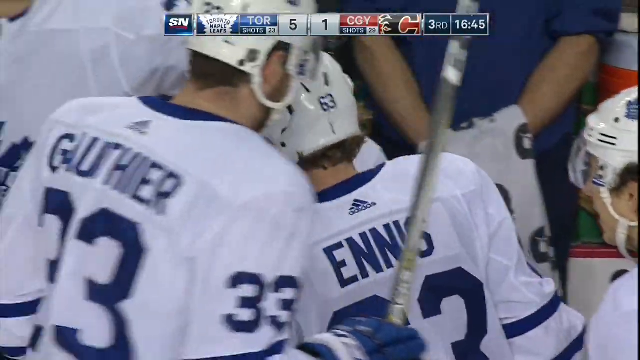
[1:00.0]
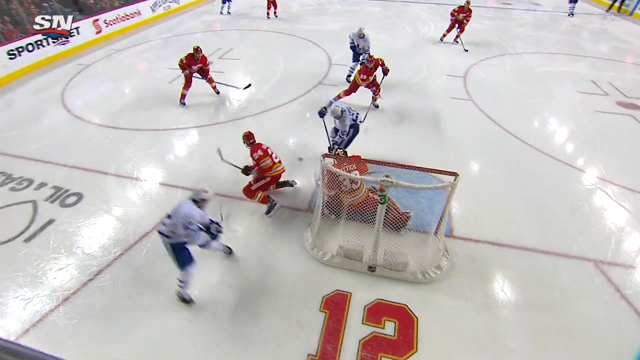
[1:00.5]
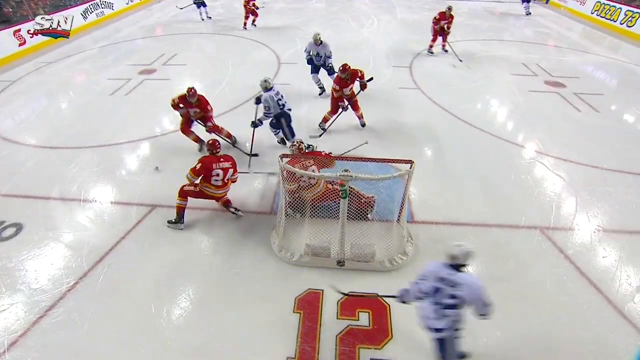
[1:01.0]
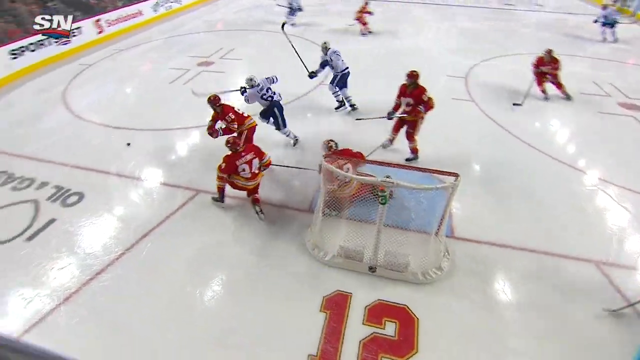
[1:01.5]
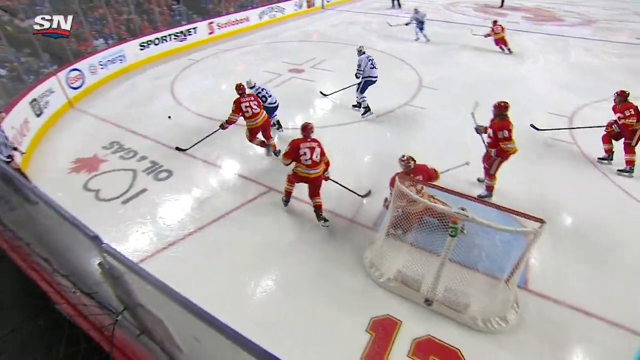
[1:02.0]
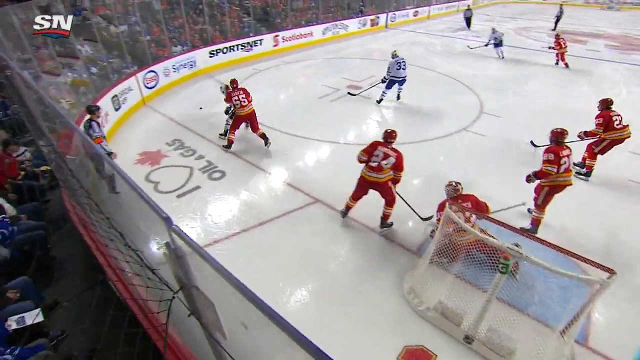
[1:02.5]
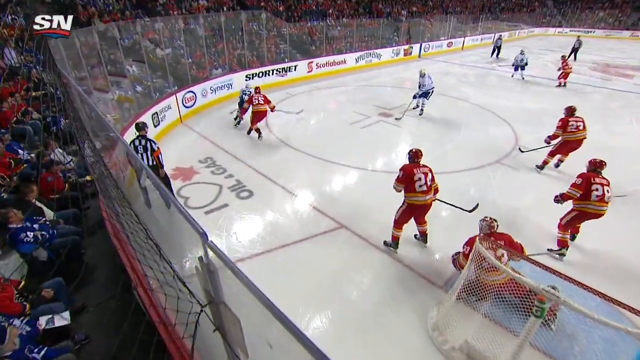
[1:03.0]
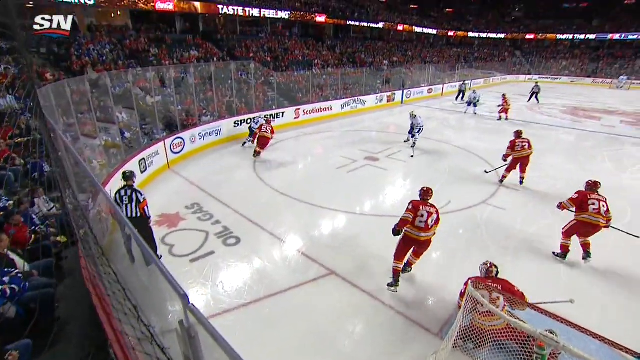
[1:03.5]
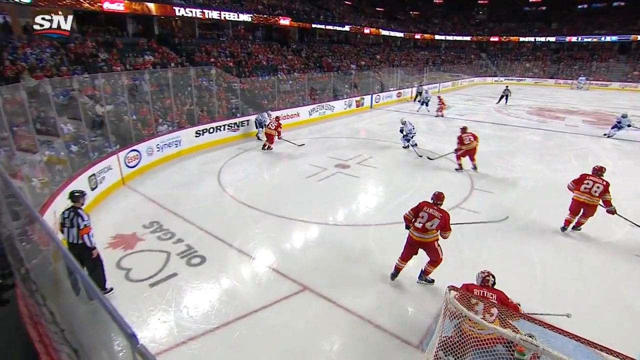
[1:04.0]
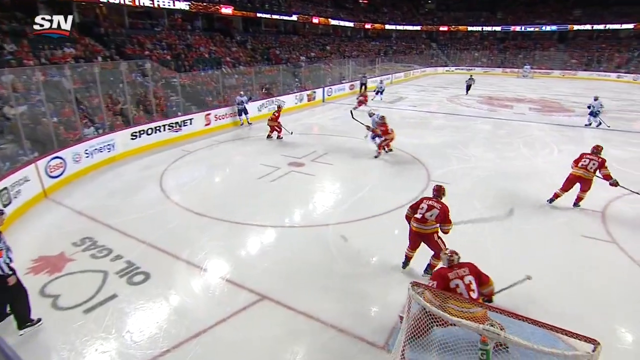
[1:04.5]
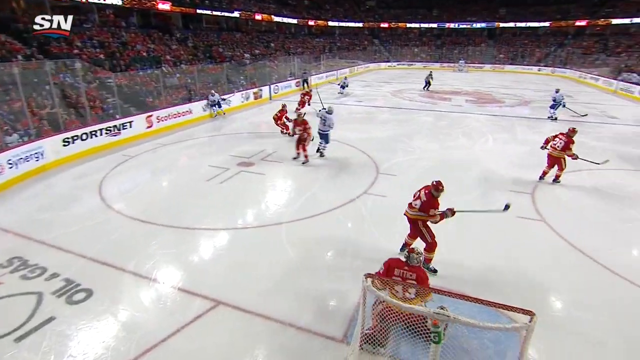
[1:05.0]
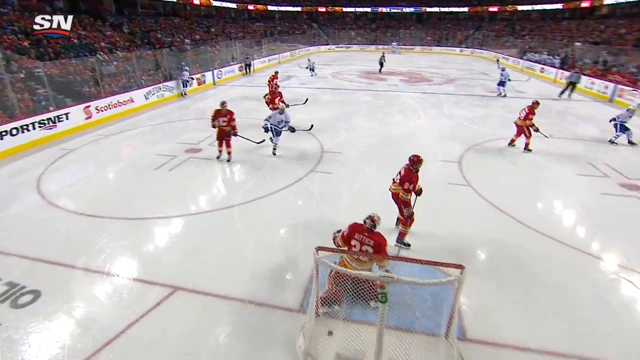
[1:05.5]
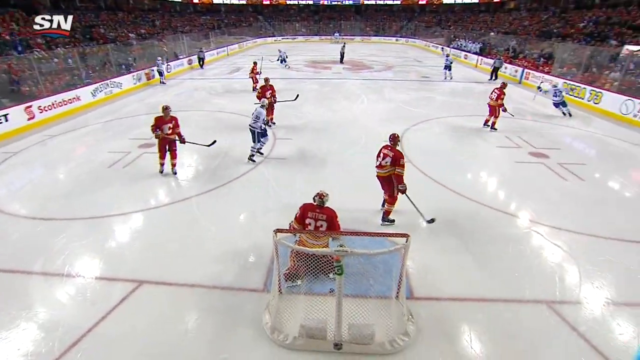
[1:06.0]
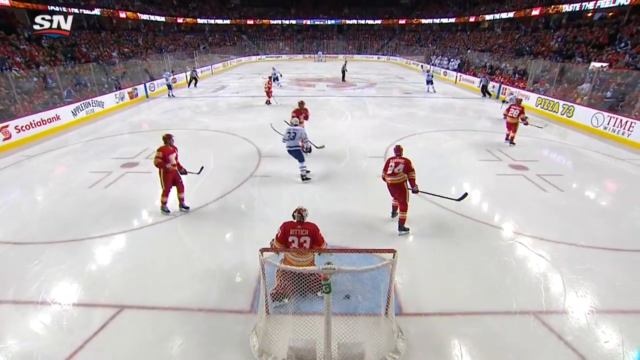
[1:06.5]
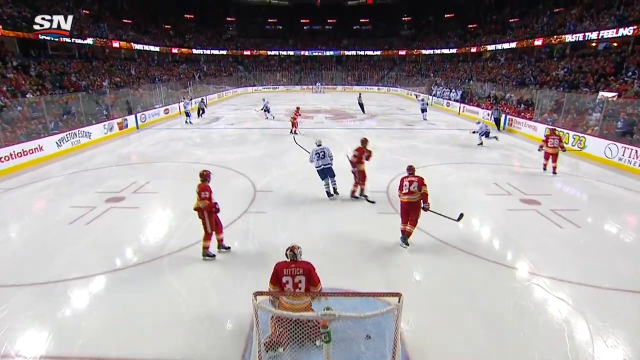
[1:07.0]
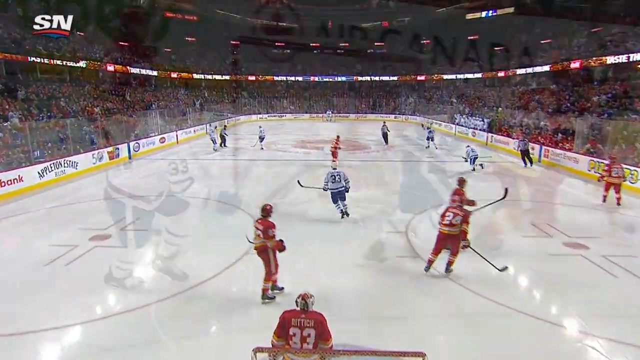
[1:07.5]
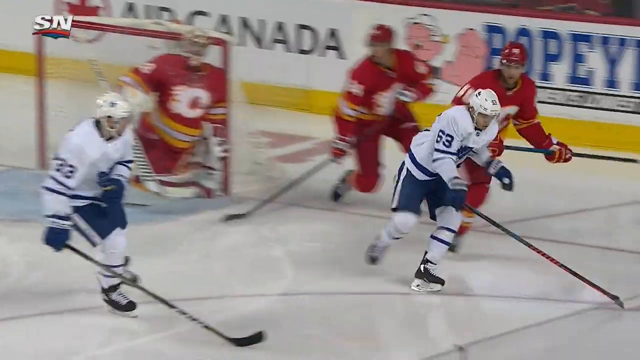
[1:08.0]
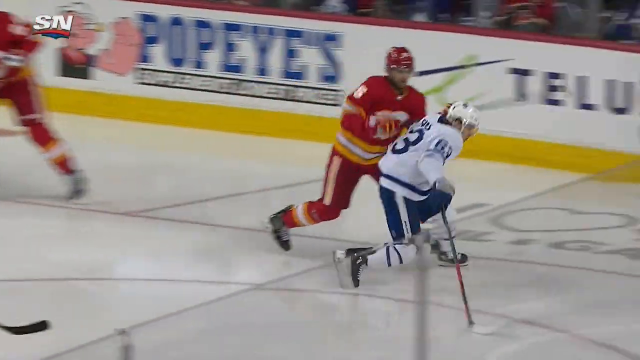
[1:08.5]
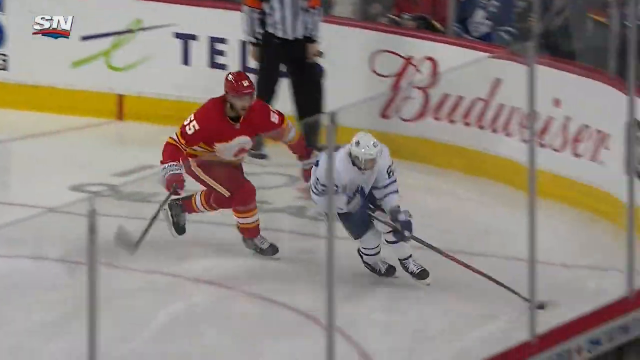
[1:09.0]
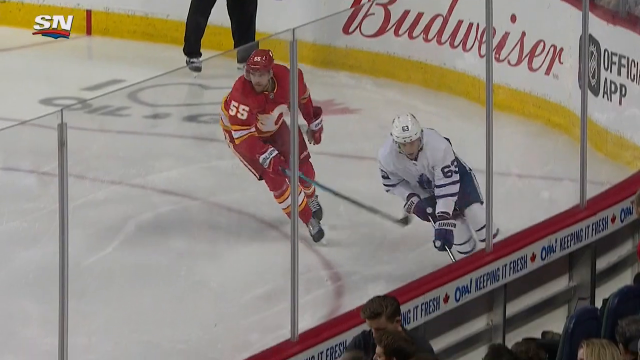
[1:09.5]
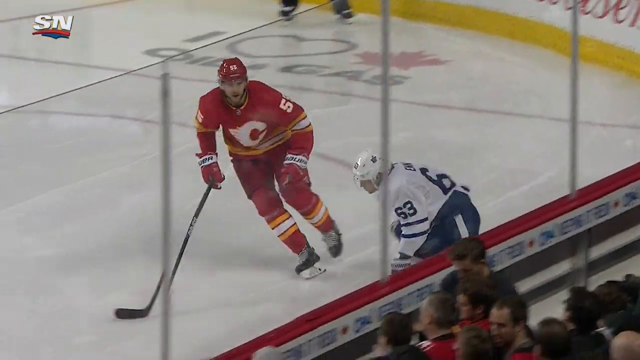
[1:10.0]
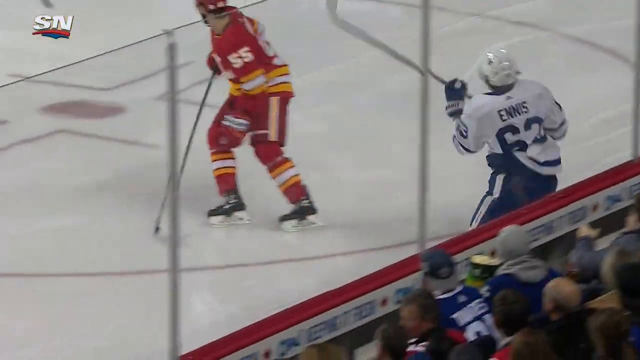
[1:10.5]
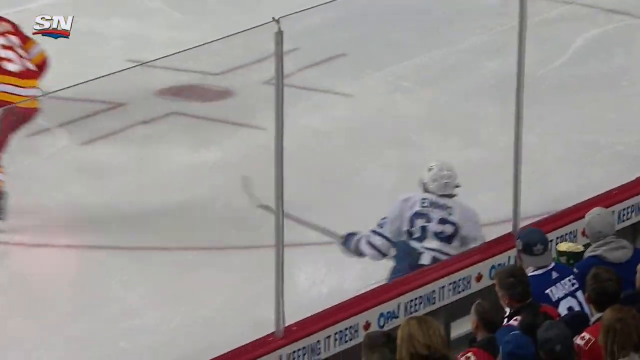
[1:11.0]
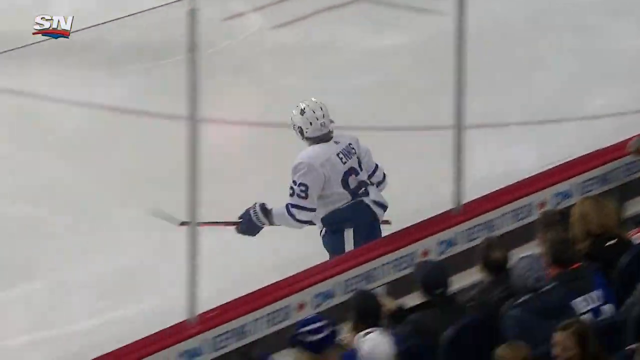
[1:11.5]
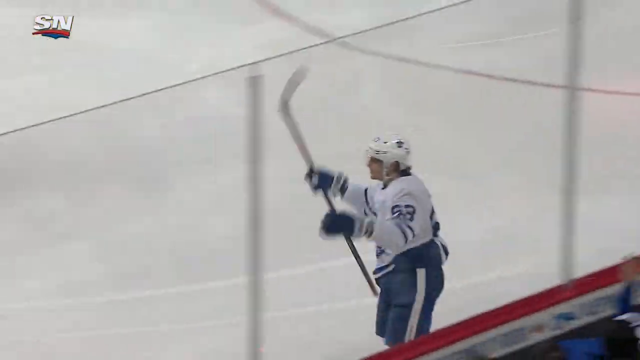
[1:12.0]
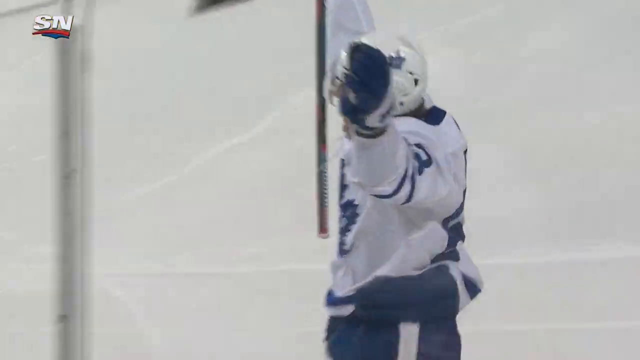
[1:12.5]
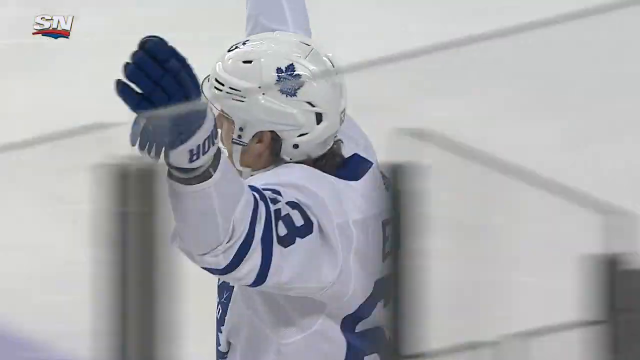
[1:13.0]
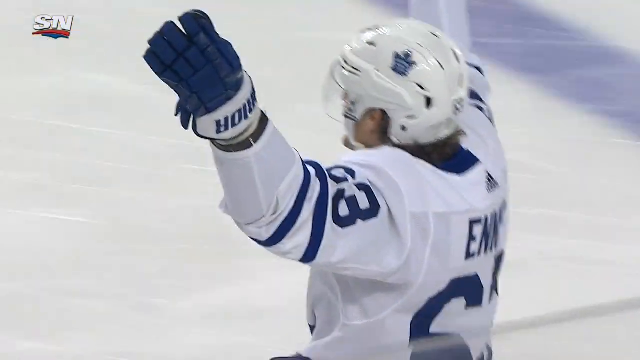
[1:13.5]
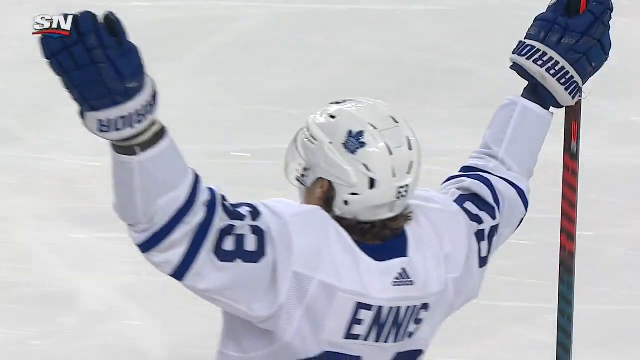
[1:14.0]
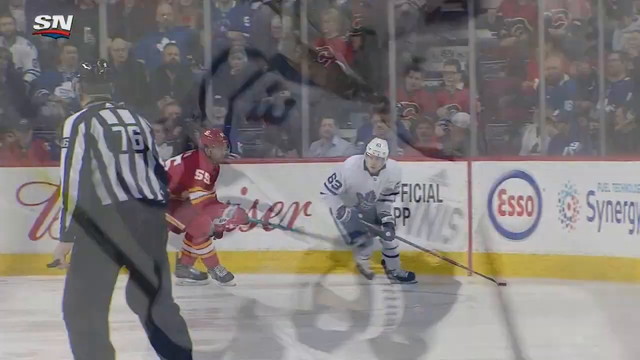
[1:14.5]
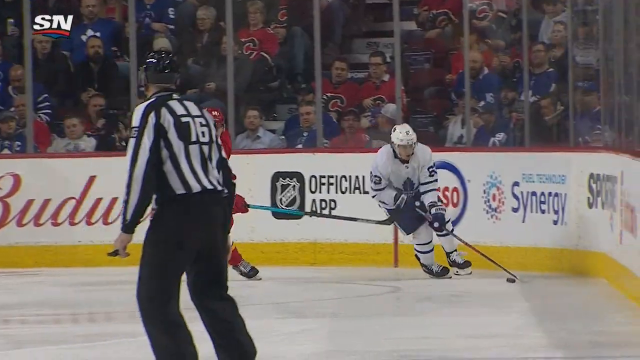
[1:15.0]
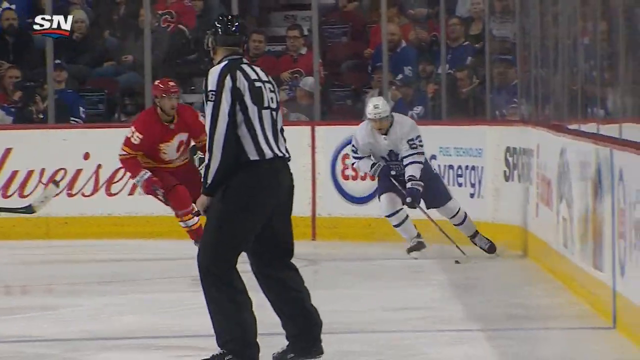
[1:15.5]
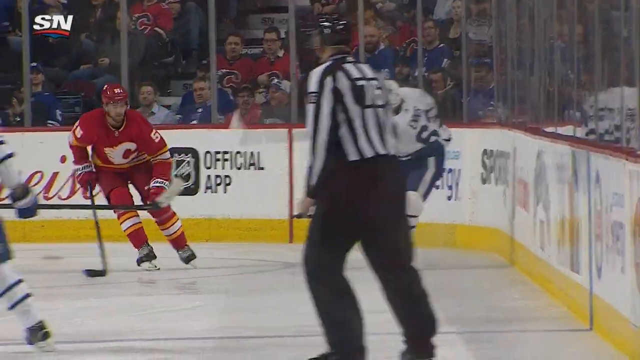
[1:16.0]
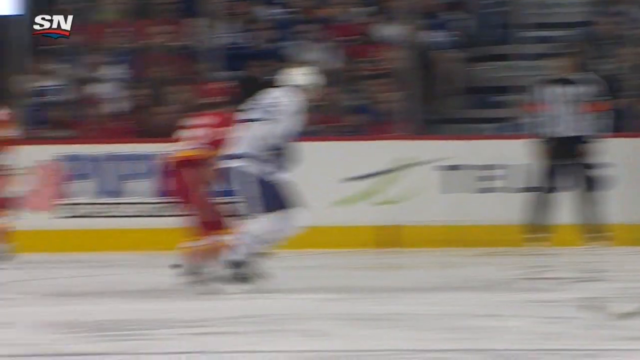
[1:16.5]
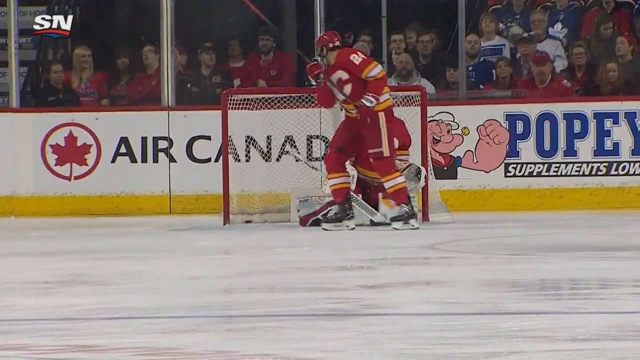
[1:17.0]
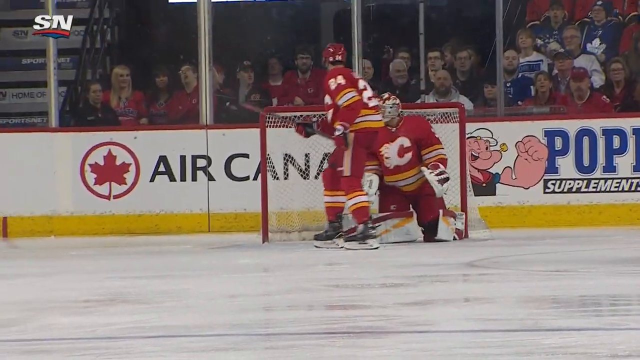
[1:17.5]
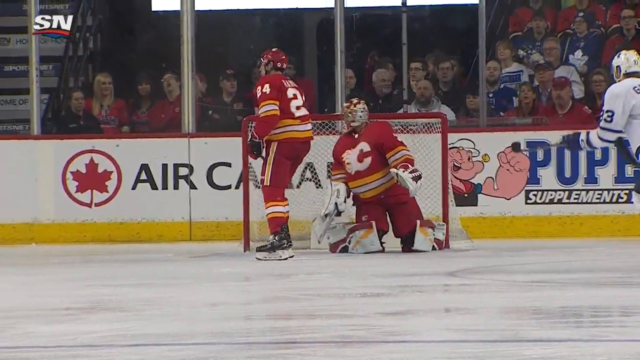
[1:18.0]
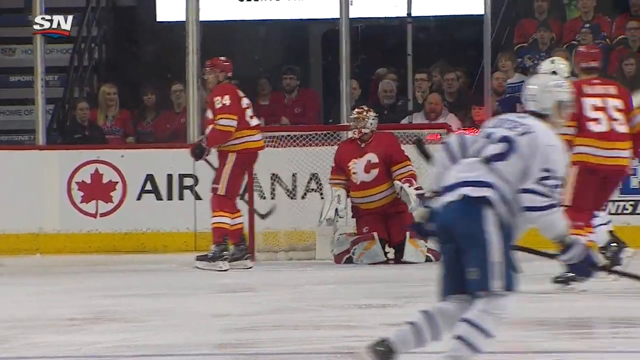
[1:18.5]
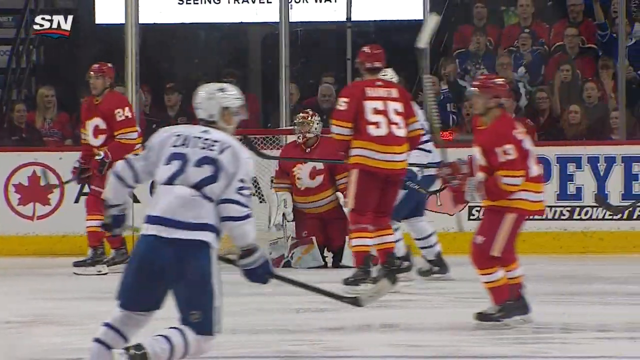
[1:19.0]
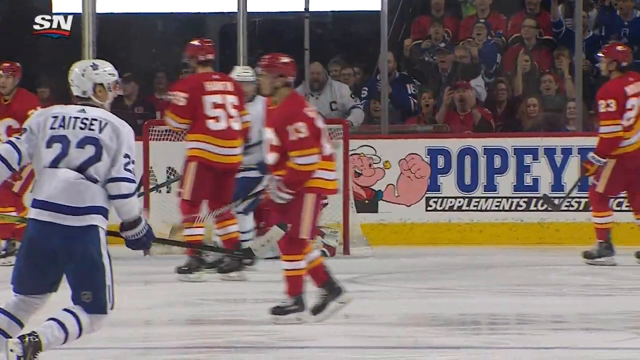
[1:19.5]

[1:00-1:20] In a zoomed-in view, Toronto Maple Leafs players face away from the screen: on the left is Gauthier, number 33, and to his right is Ennis, number 63. Both are standing on the side of the hockey rink, facing the fans. The scene changes to the players out on the rink in an active match, viewed toward the end of the rink where the Calgary Flames players are trying to block their goal. The Calgary Flames goalie is kneeling down, trying not to let the Toronto Maple Leafs score another goal. Players of both teams skate vigorously around the rink, hitting the puck with their sticks, and the Calgary Flames try to make their way back down the ice to prevent another Toronto goal.